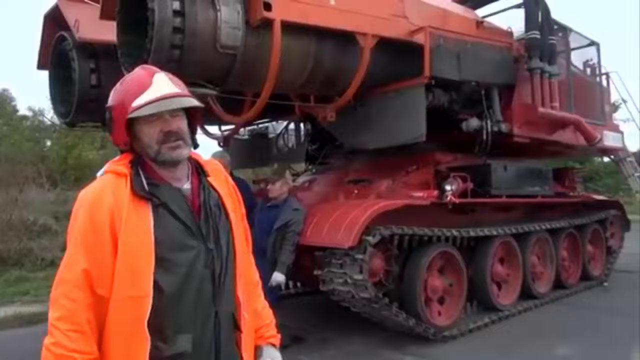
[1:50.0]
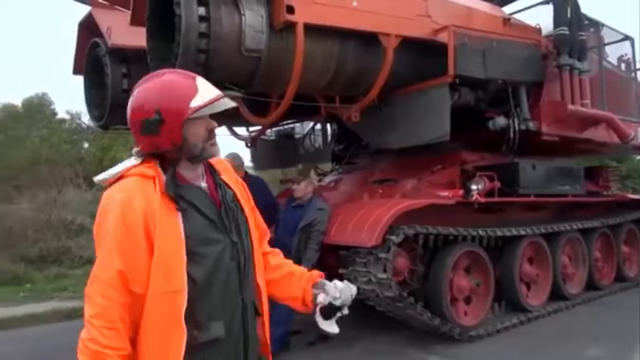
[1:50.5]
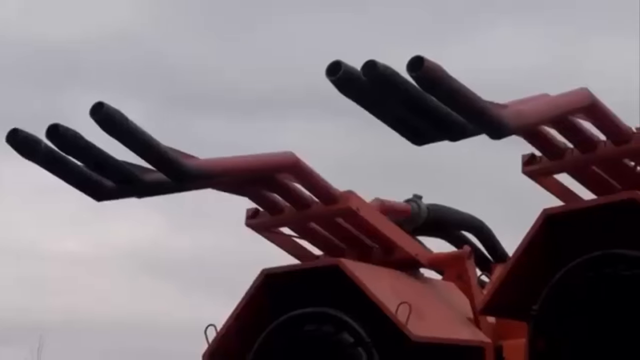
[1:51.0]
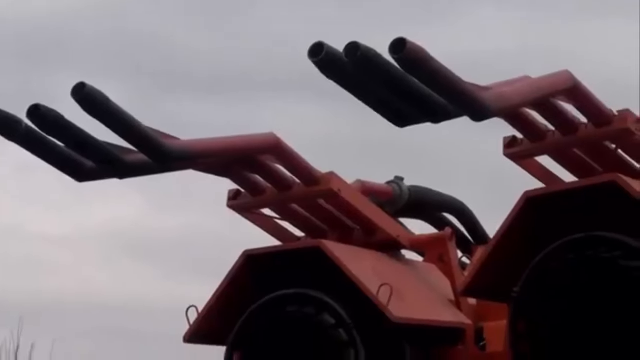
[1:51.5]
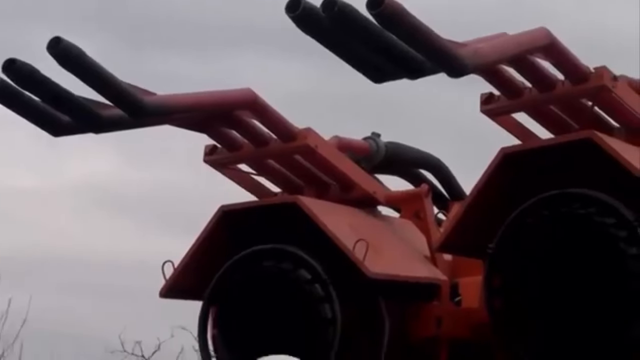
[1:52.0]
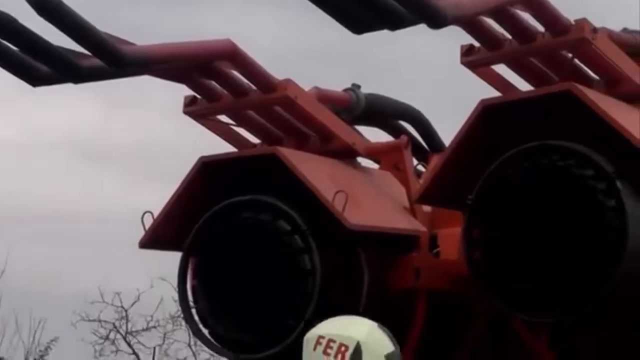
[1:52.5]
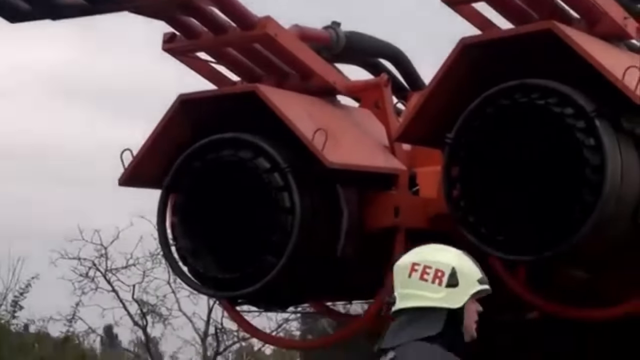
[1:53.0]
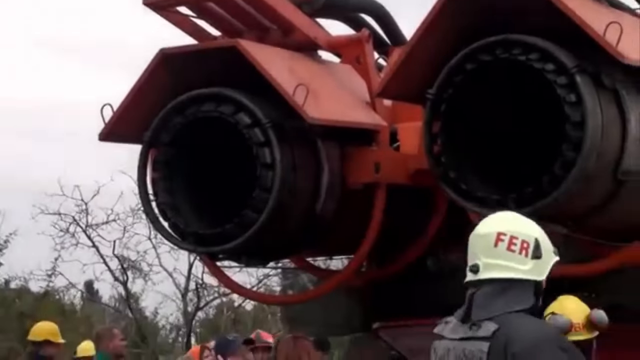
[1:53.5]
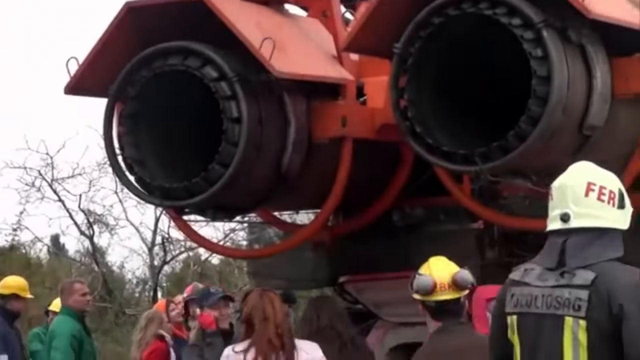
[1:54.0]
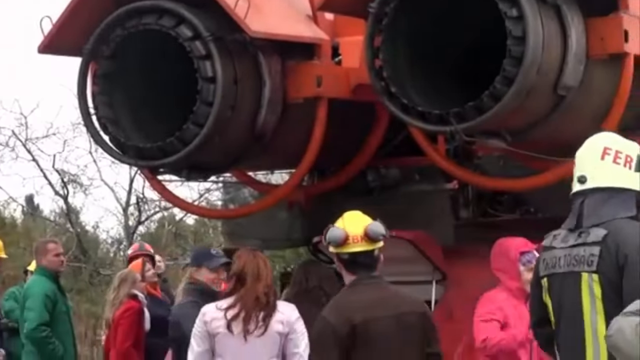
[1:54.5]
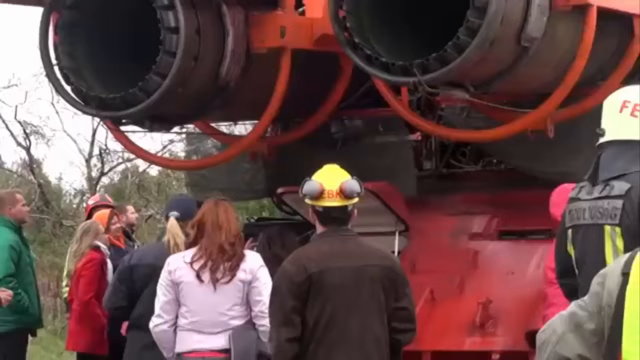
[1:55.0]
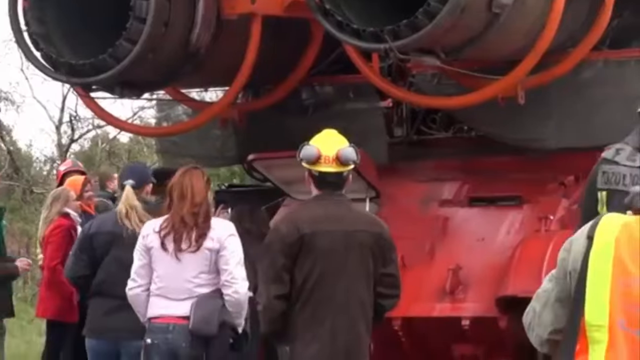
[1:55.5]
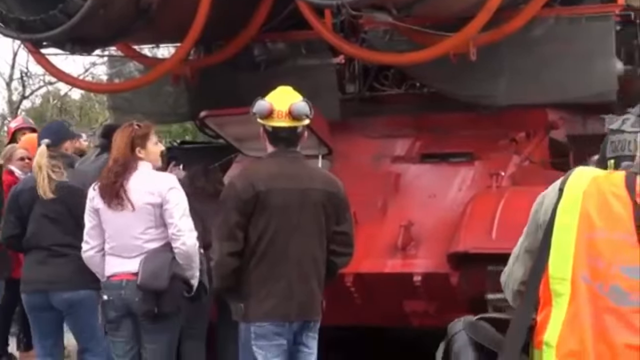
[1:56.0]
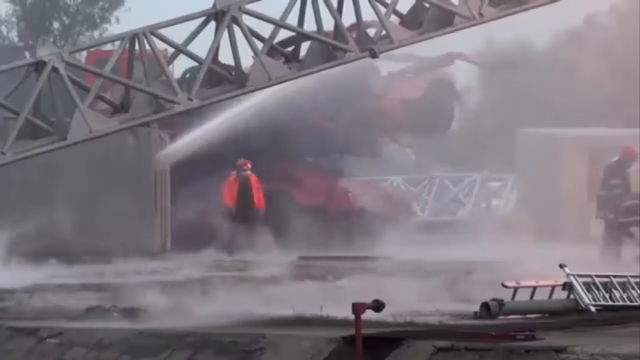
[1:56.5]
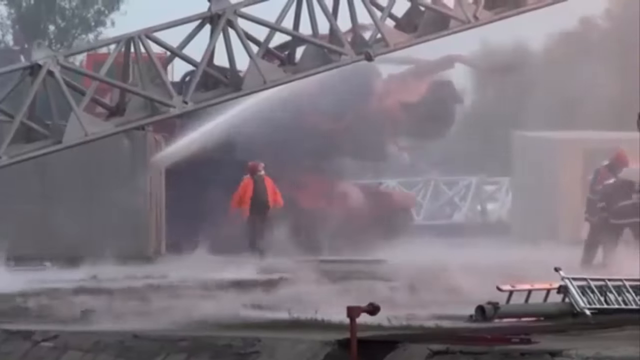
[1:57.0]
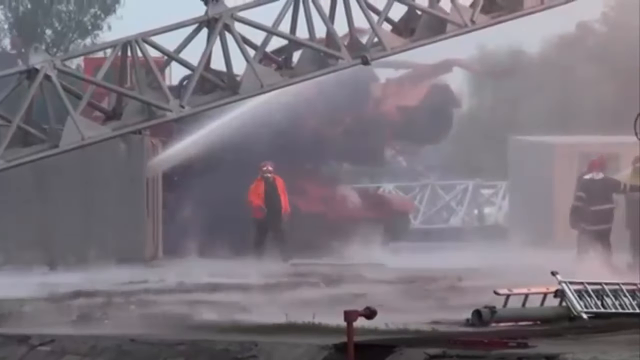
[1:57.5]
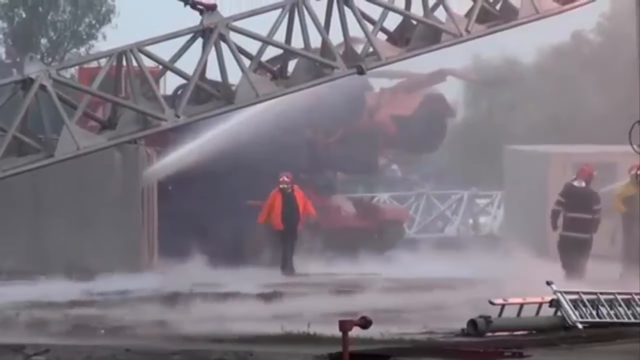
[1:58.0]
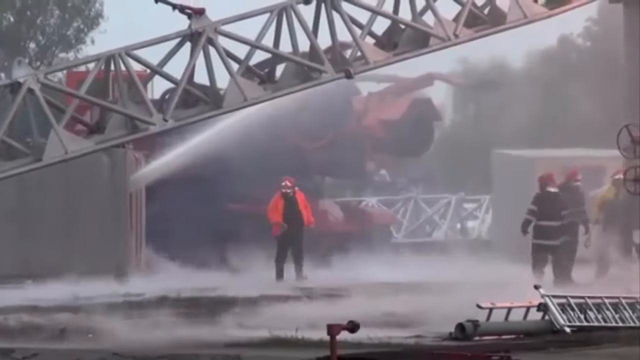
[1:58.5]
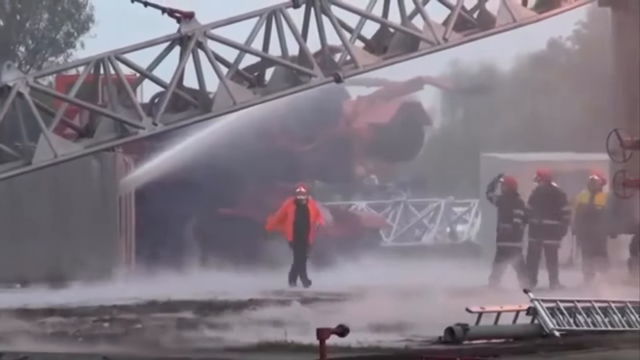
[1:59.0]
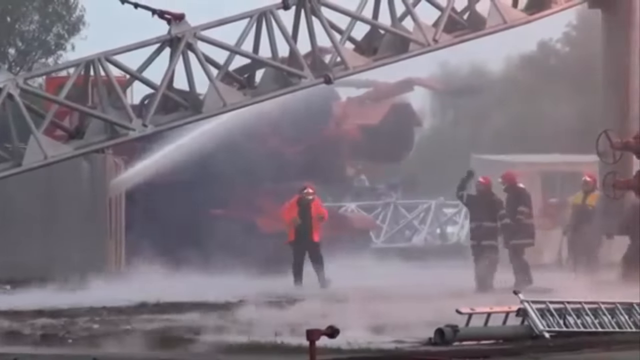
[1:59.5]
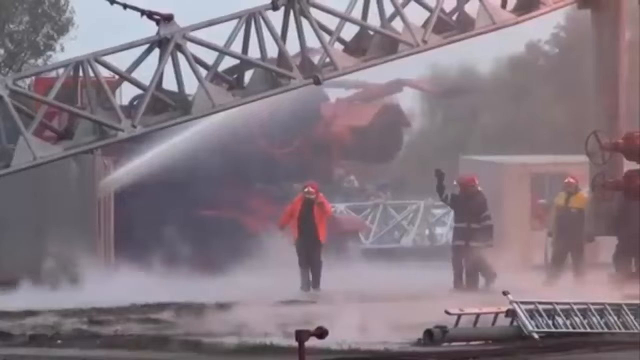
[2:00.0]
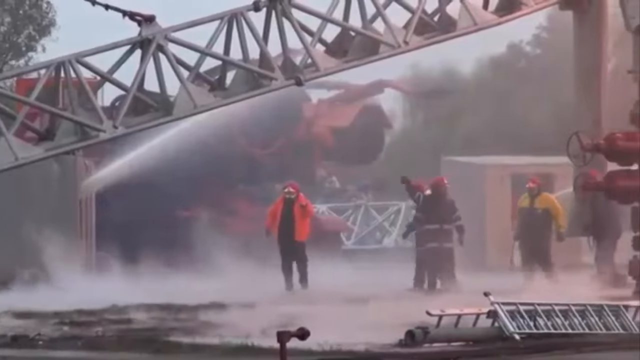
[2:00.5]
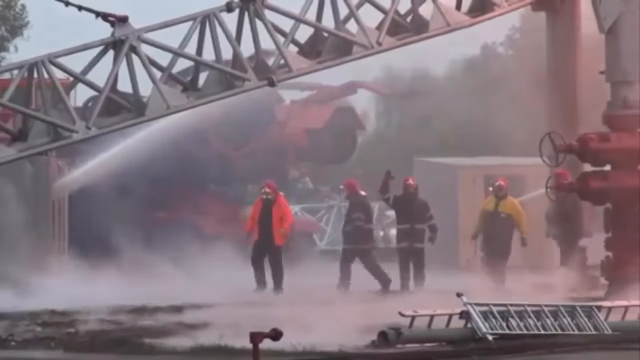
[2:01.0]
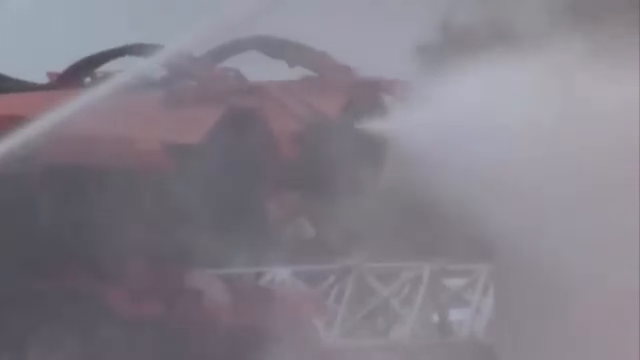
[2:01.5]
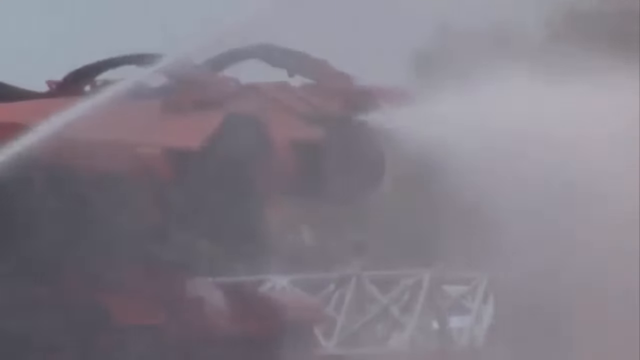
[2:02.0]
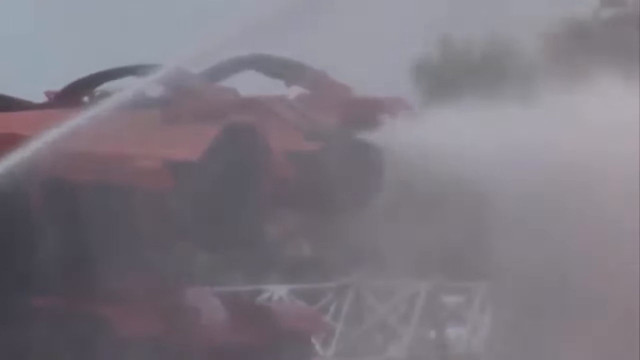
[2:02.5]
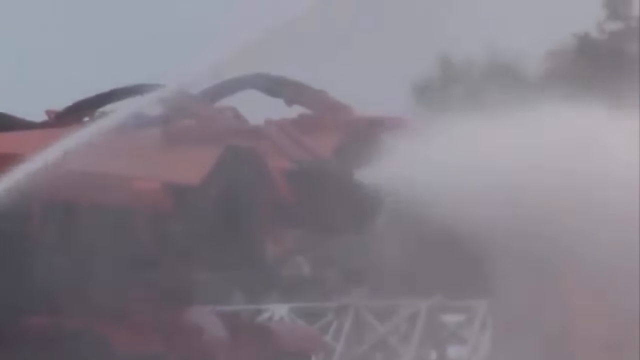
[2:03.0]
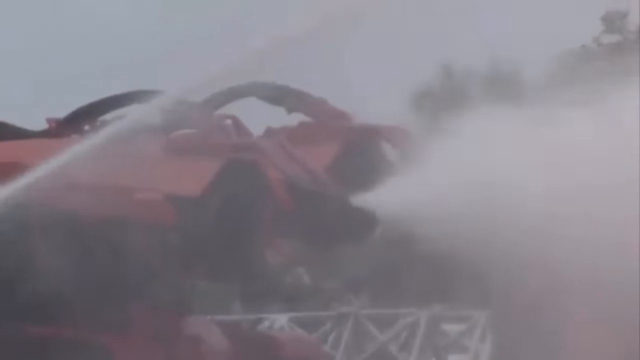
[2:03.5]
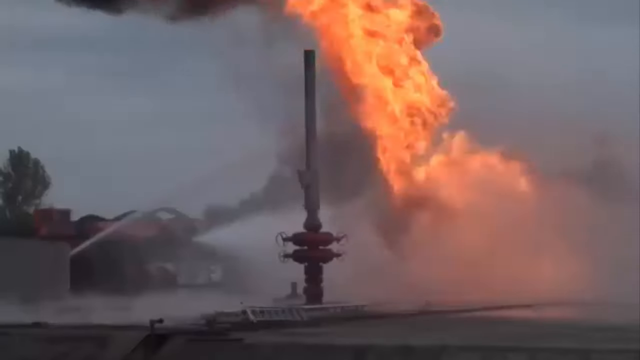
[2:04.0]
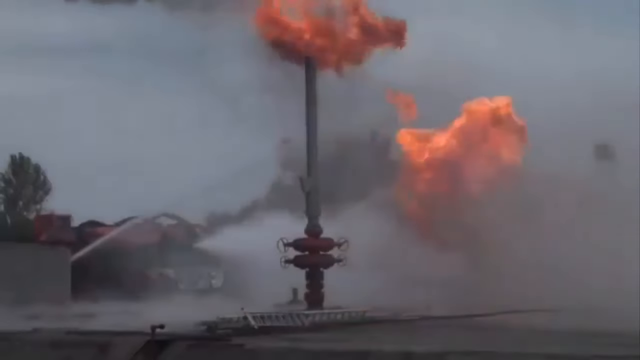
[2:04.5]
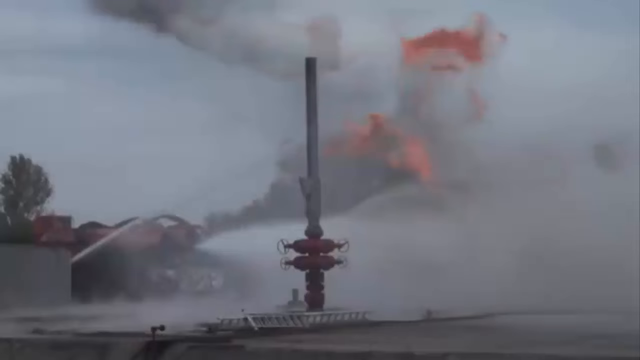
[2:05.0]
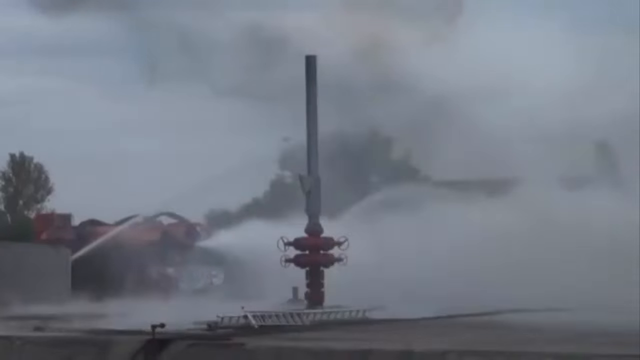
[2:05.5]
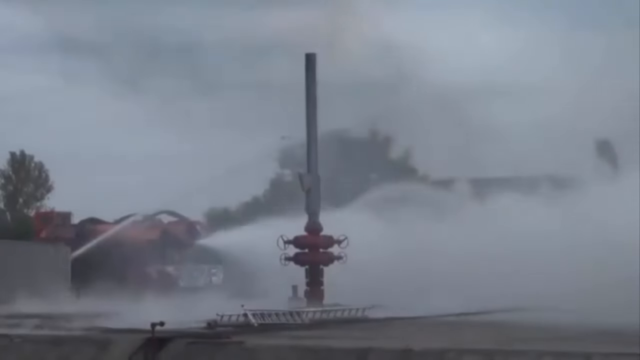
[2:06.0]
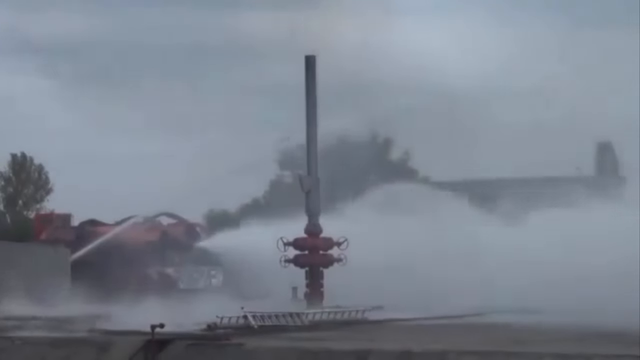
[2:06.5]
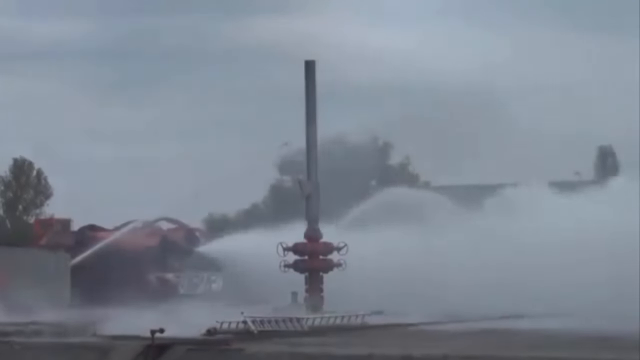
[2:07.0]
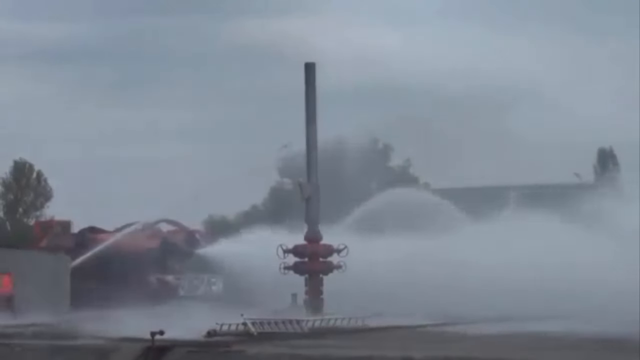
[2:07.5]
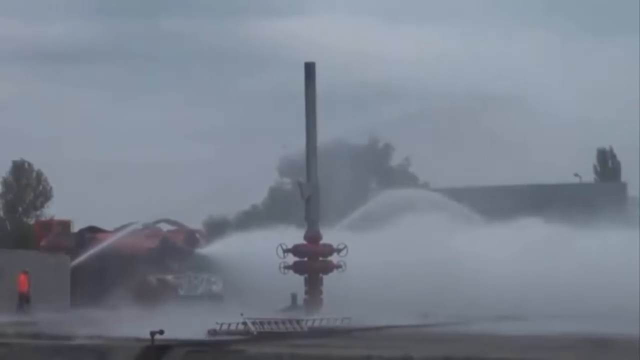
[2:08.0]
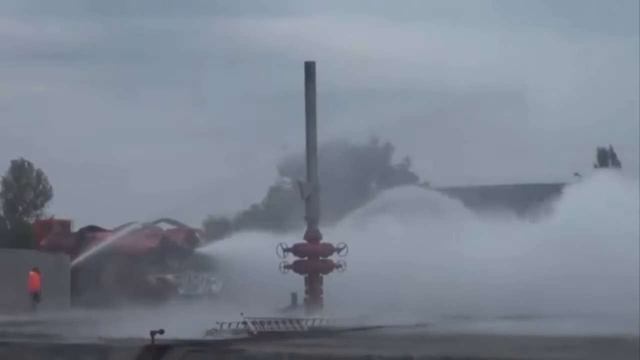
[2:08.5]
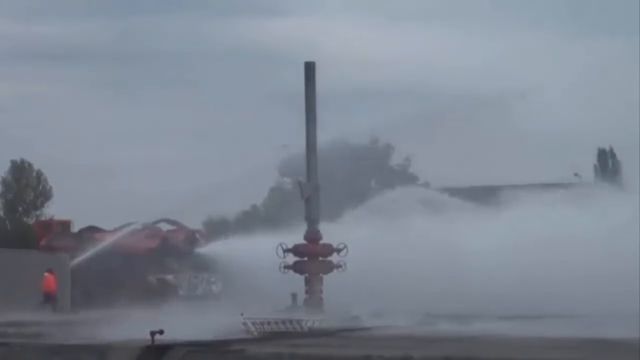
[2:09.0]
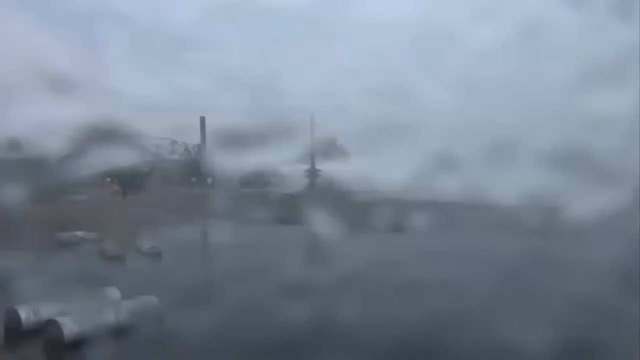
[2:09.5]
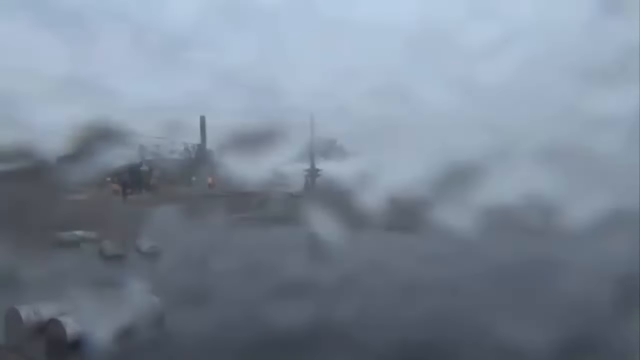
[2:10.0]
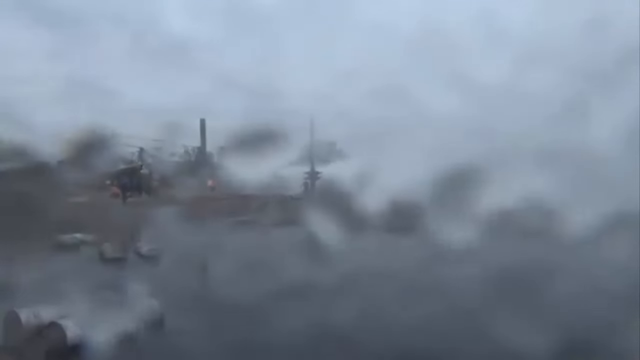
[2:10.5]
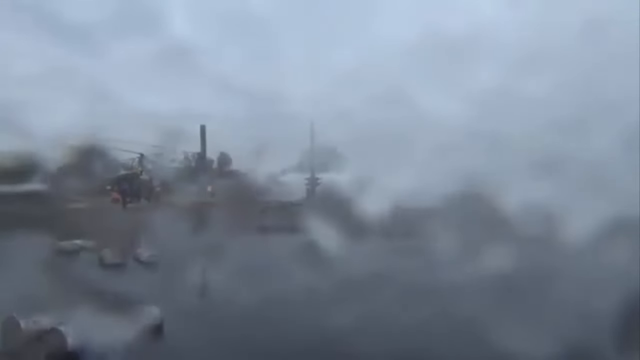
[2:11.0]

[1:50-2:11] The person filming captures the machines up close. There are many taps used to fire water in many different ways.